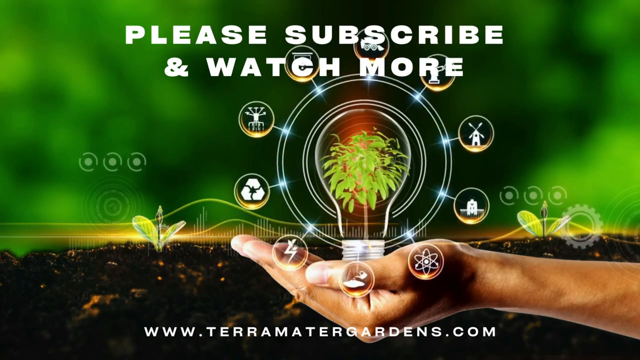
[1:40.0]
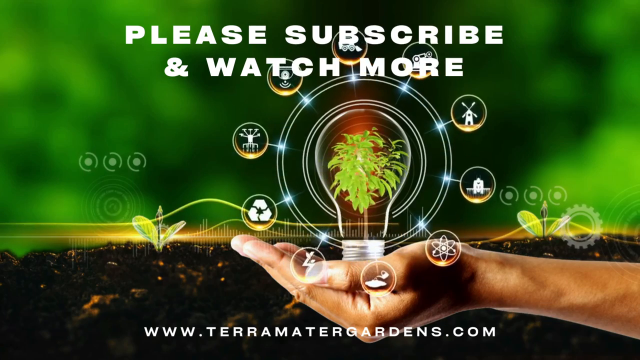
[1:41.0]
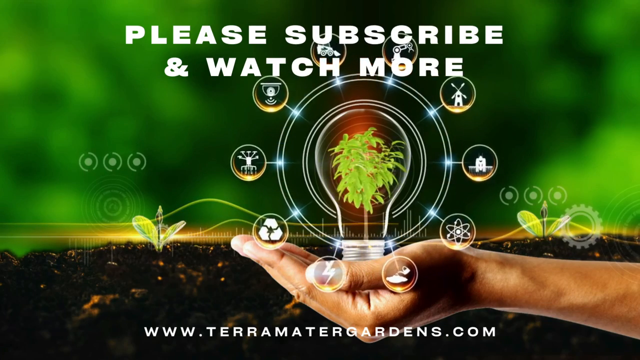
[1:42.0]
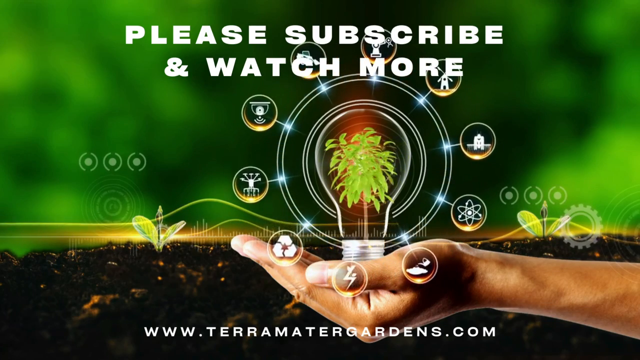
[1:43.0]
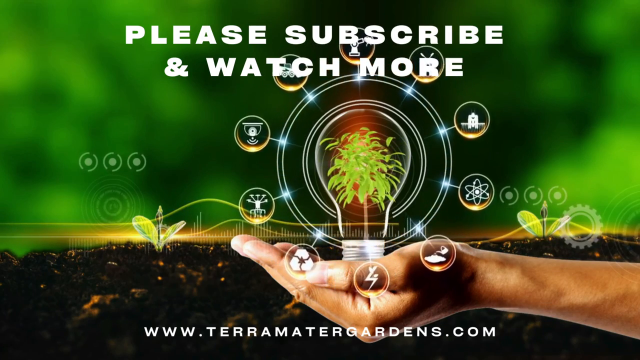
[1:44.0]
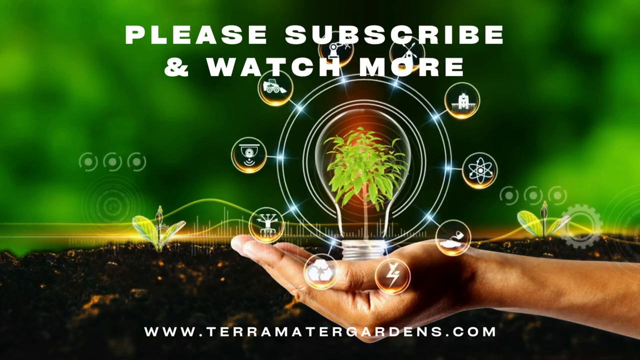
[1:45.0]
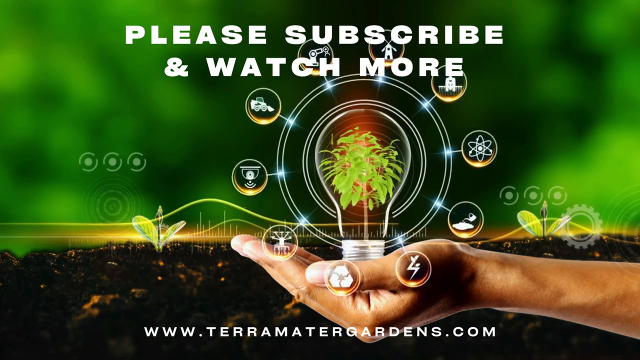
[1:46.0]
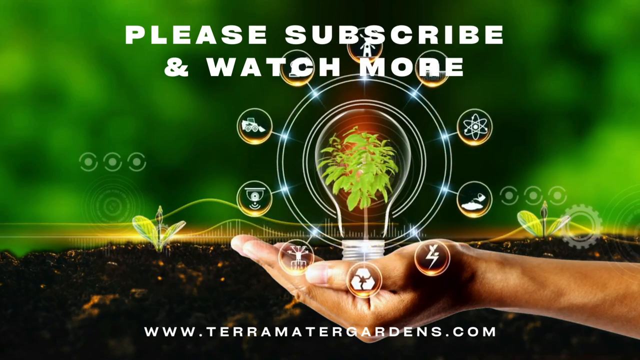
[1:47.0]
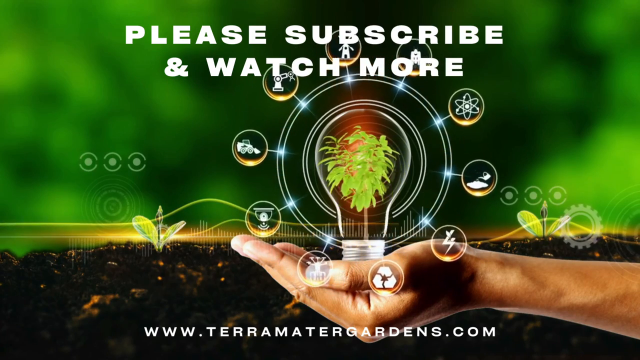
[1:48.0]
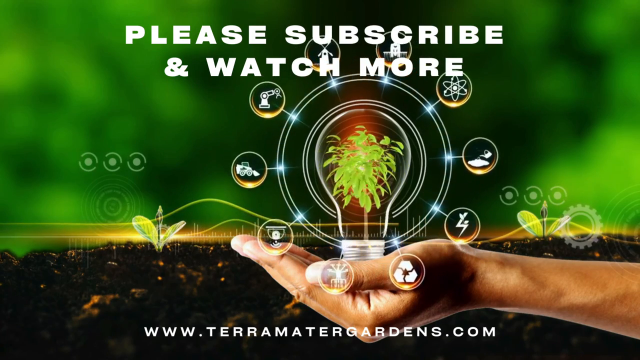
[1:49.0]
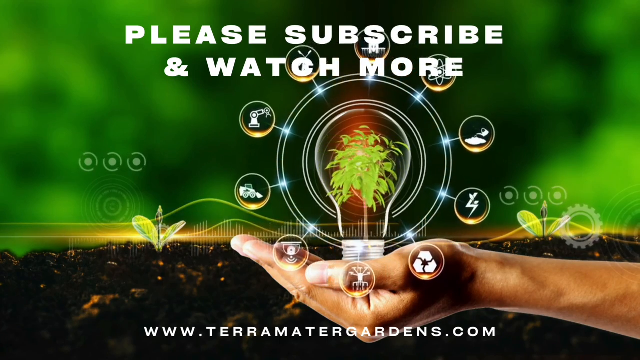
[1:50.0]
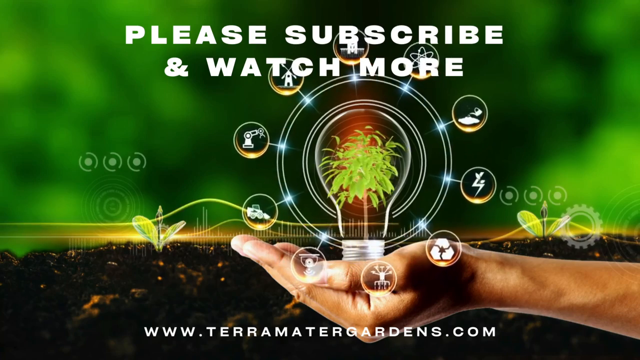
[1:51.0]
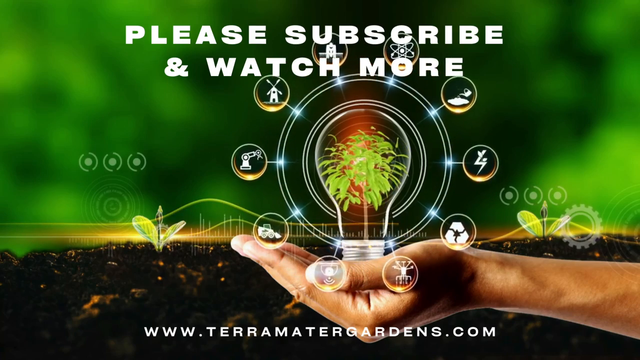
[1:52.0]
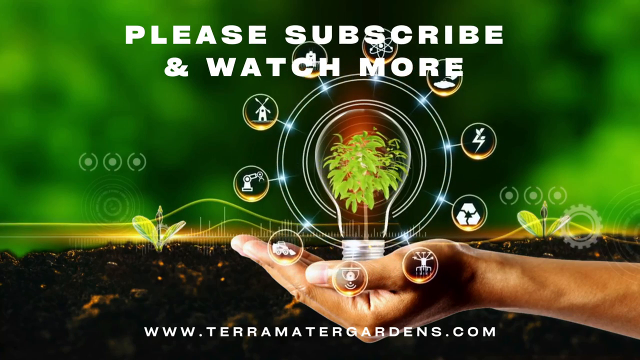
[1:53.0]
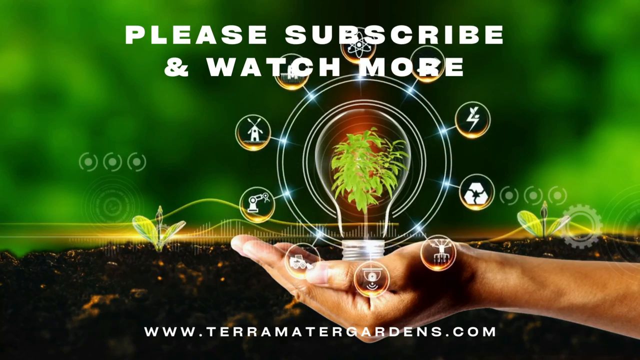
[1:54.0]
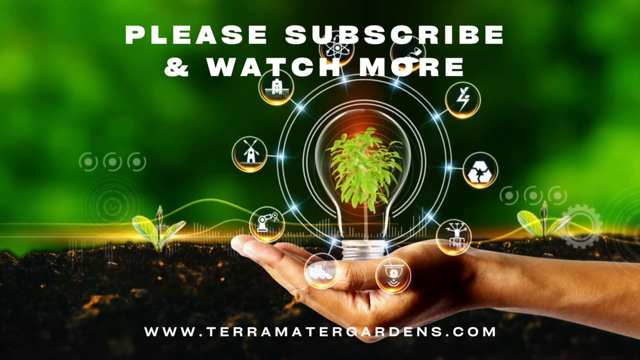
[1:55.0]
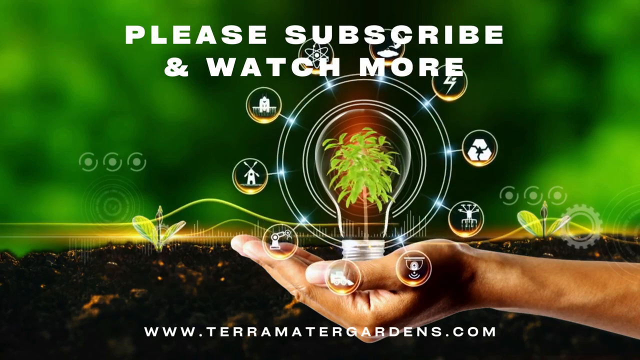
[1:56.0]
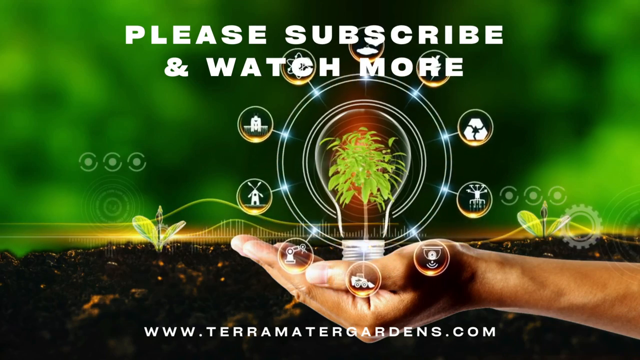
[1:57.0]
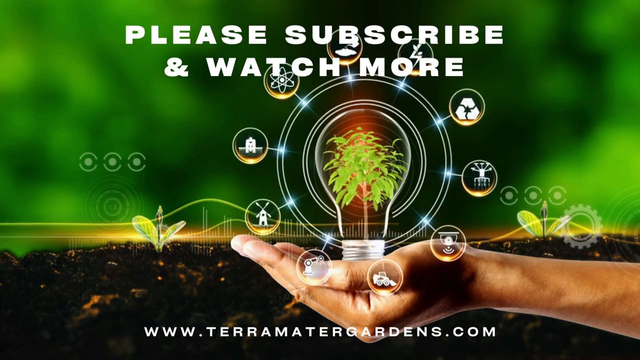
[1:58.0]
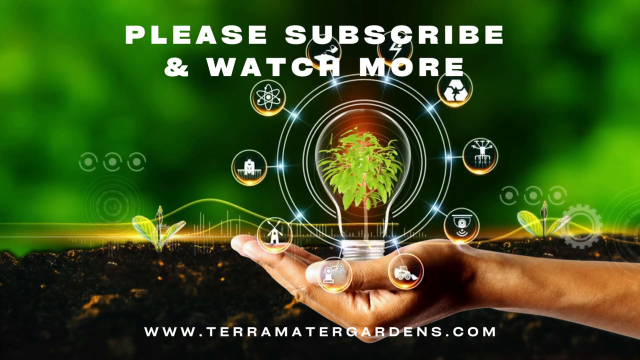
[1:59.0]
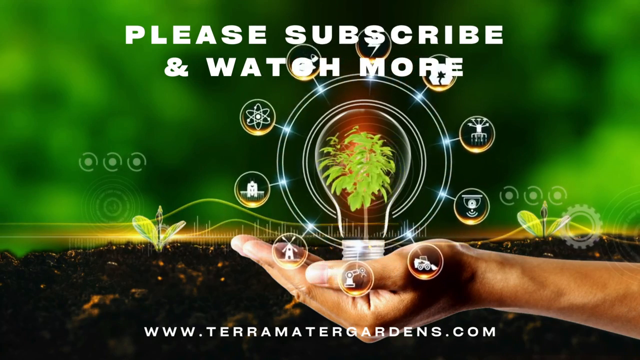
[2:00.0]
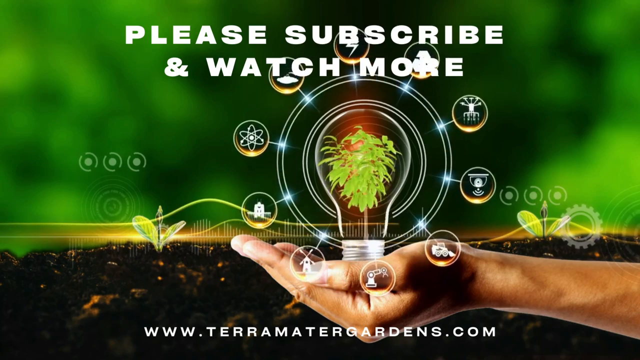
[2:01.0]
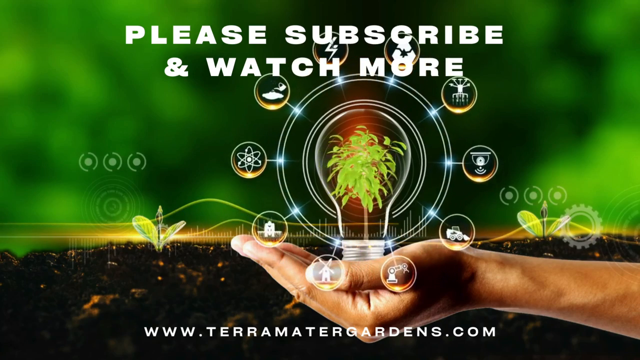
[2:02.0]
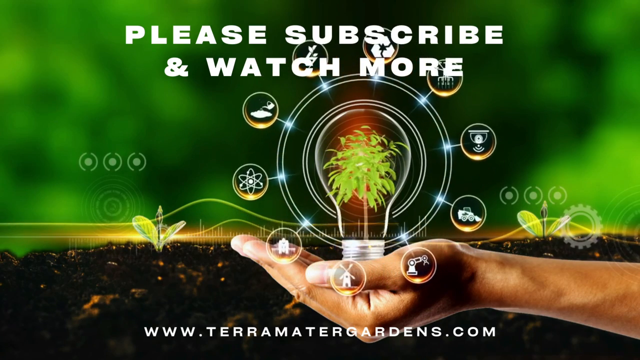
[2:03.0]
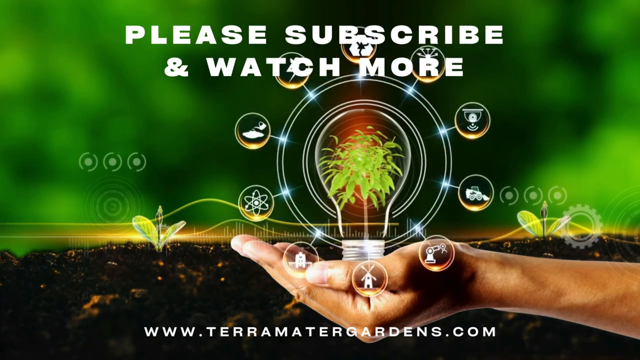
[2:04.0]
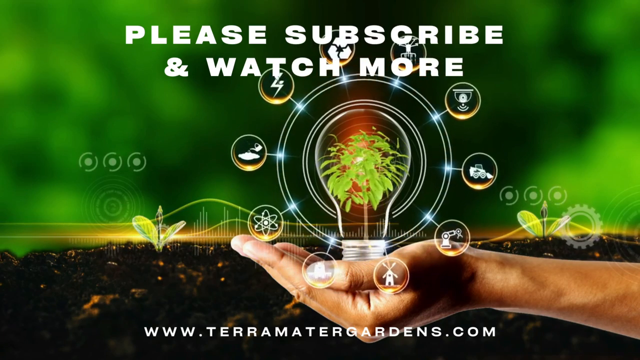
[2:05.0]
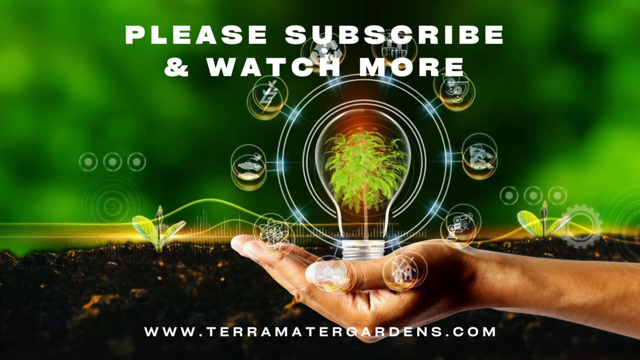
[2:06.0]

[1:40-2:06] What looks like an image of a person's hand with the palm facing up appears, with an animated light bulb above the palm that has a plant inside it. Around the light bulb is a whole bunch of icons that are circling: one looks like a windmill, one has a building and one has a recycling logo. In the background is dirt with little buds growing out of it and a couple of flowers on each plant, and farther back is a slightly blurred background of light green and dark green bushes. Wording in the front says "please subscribe and watch more".